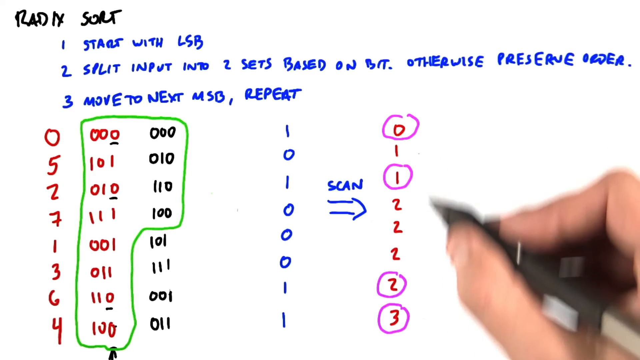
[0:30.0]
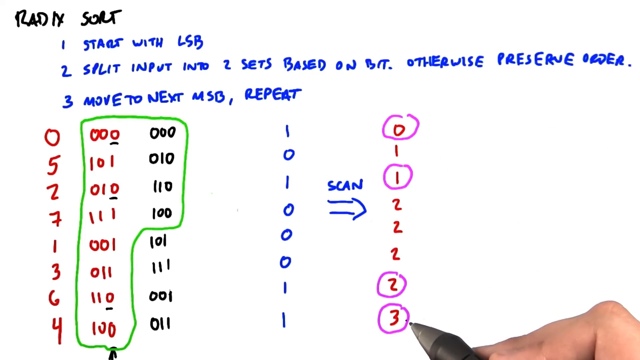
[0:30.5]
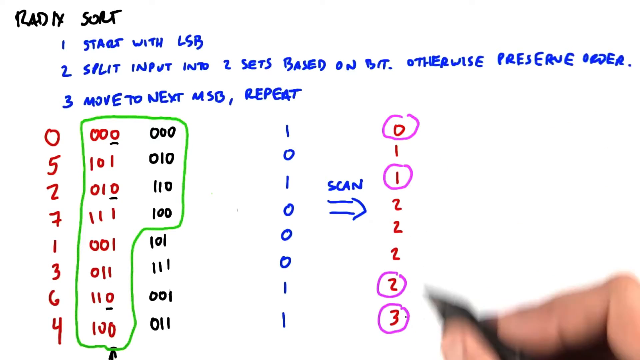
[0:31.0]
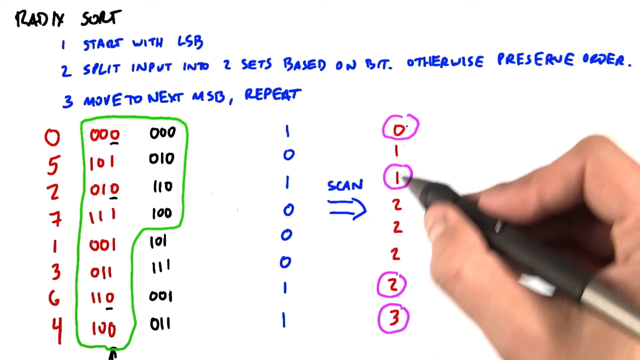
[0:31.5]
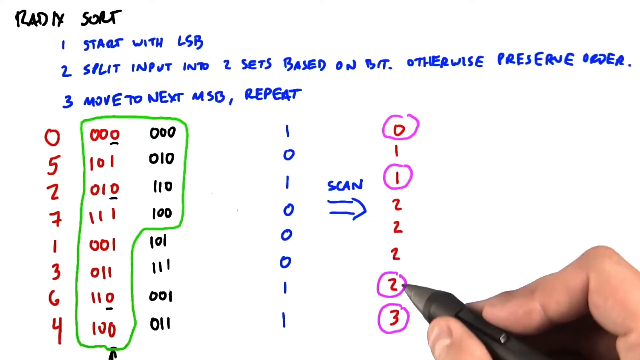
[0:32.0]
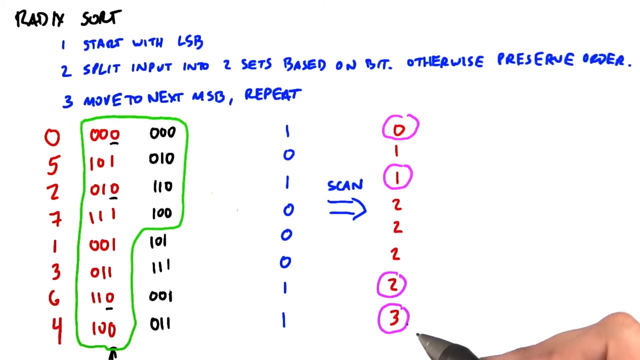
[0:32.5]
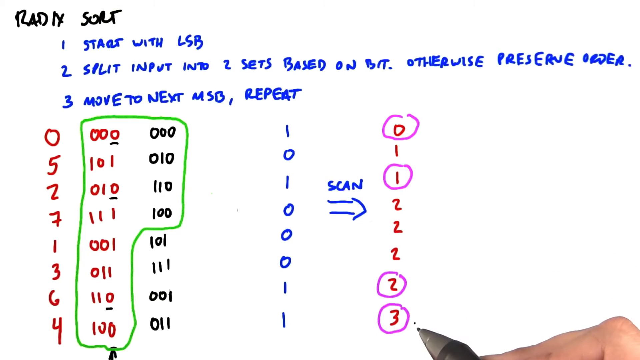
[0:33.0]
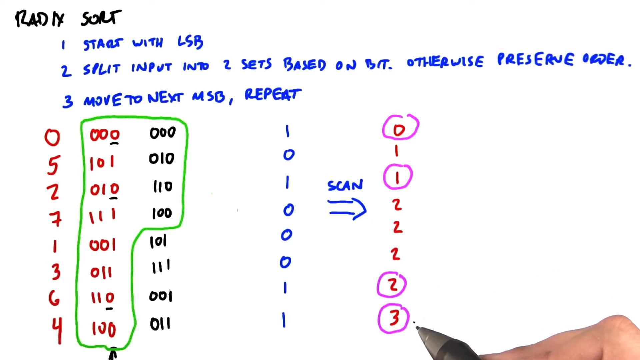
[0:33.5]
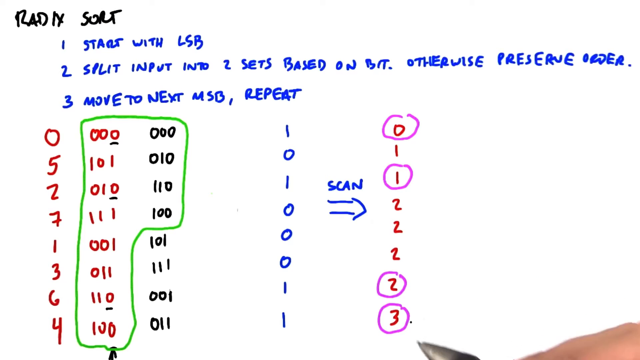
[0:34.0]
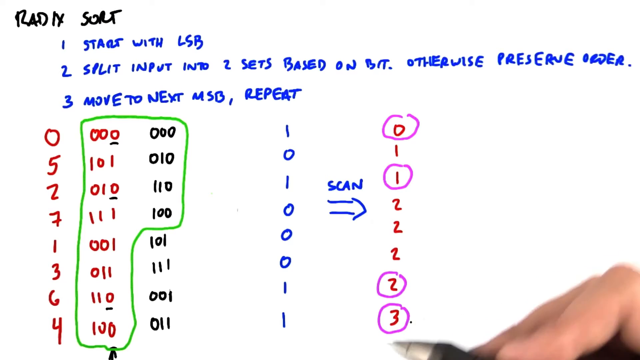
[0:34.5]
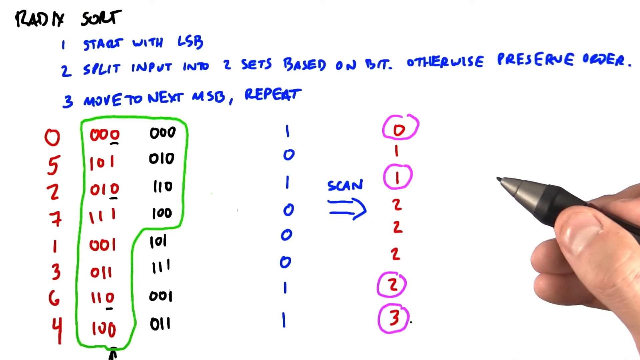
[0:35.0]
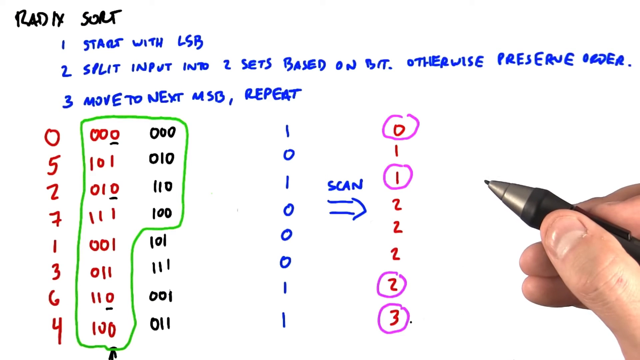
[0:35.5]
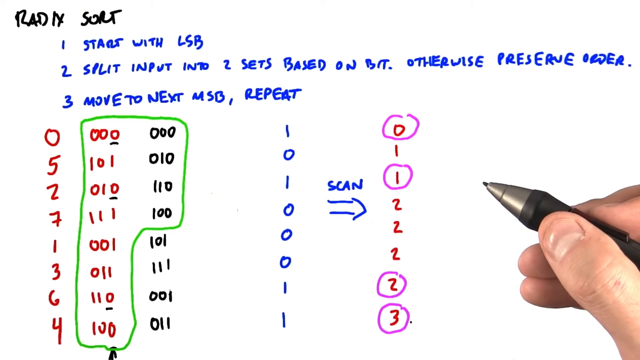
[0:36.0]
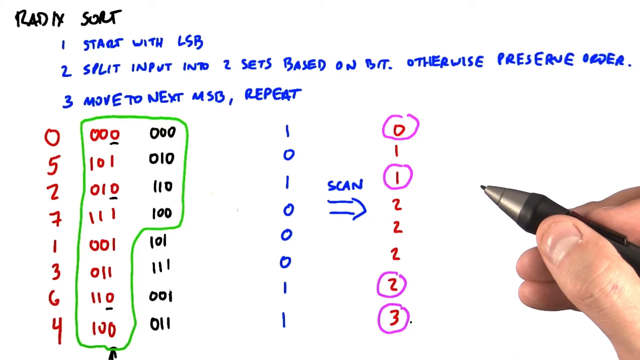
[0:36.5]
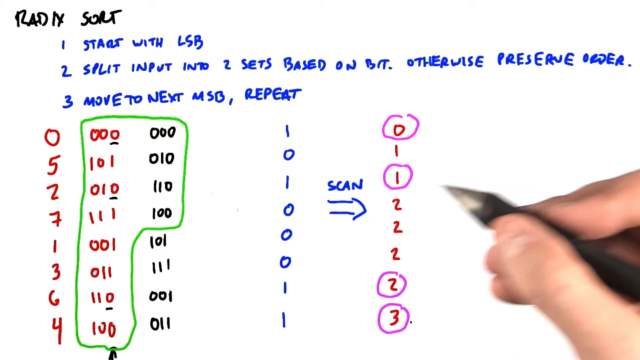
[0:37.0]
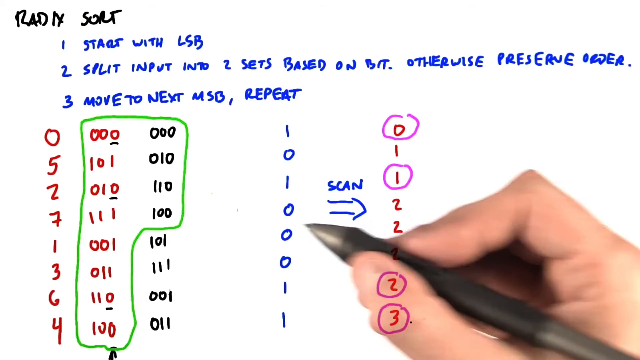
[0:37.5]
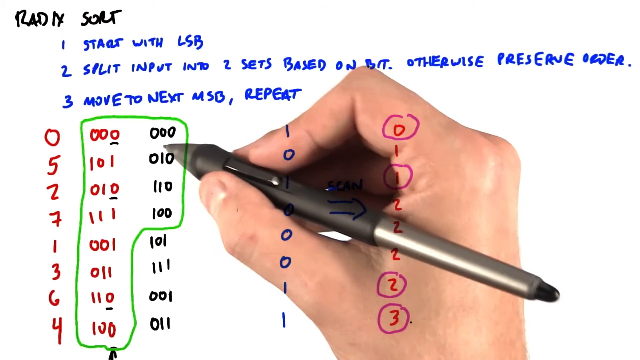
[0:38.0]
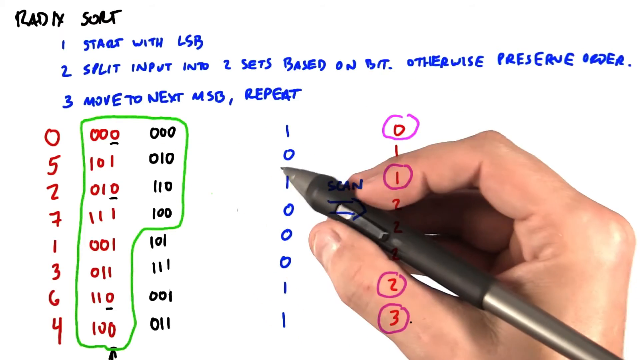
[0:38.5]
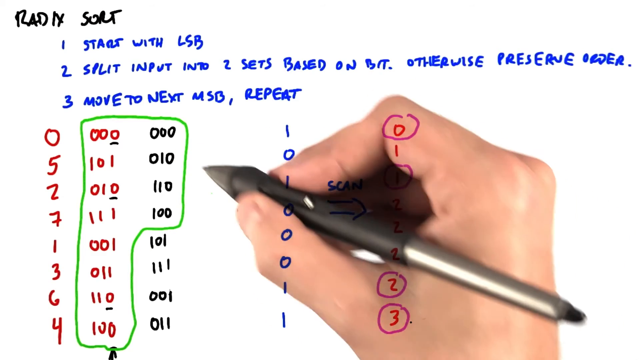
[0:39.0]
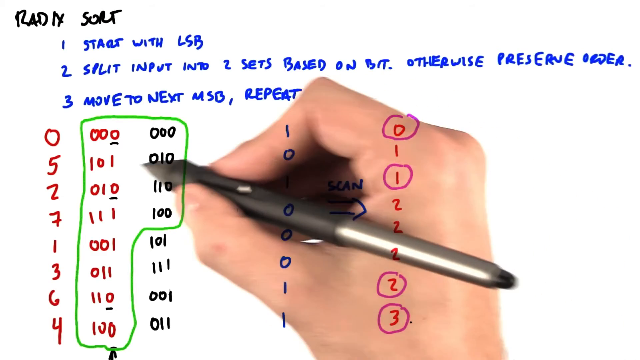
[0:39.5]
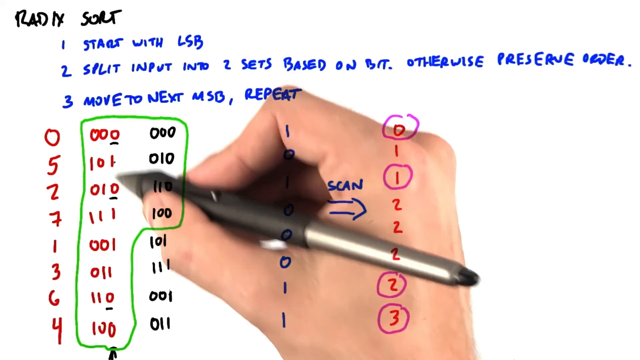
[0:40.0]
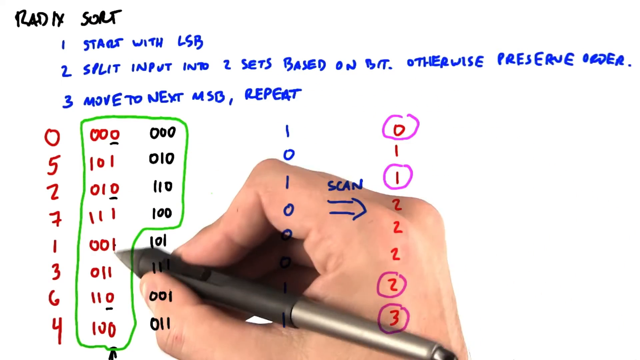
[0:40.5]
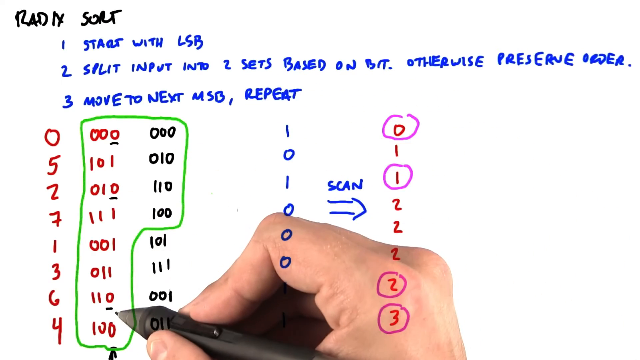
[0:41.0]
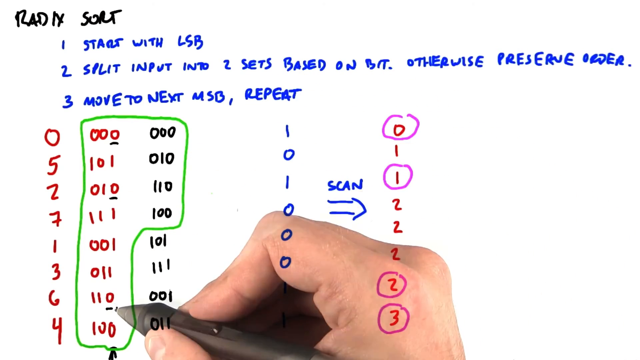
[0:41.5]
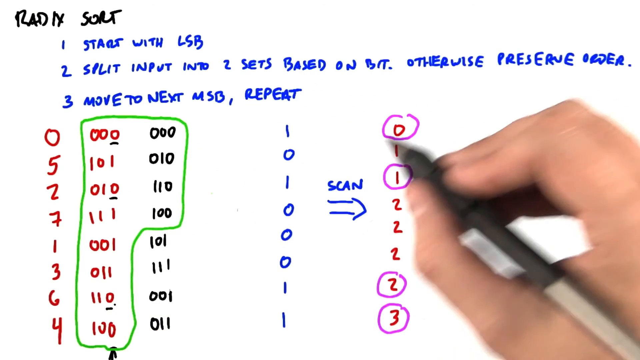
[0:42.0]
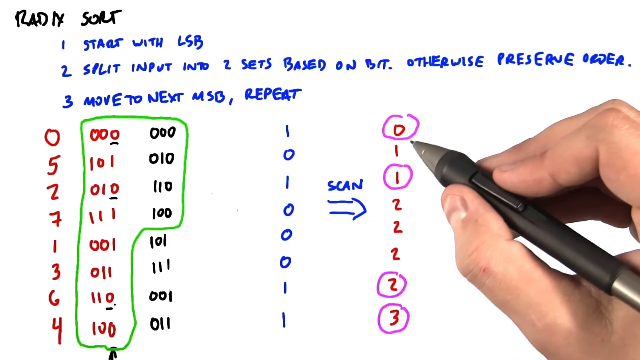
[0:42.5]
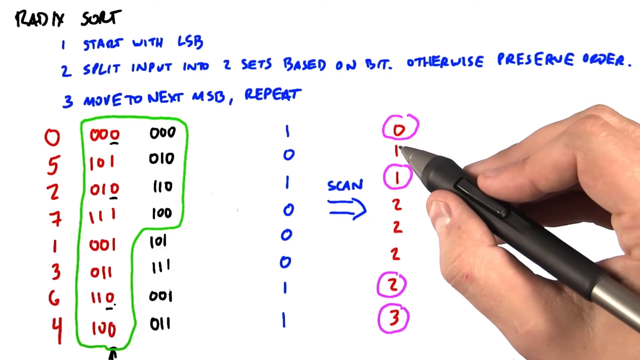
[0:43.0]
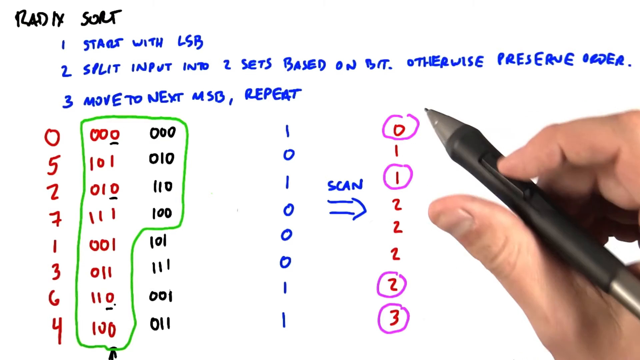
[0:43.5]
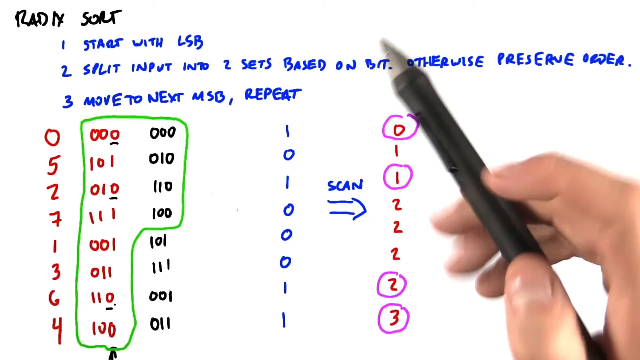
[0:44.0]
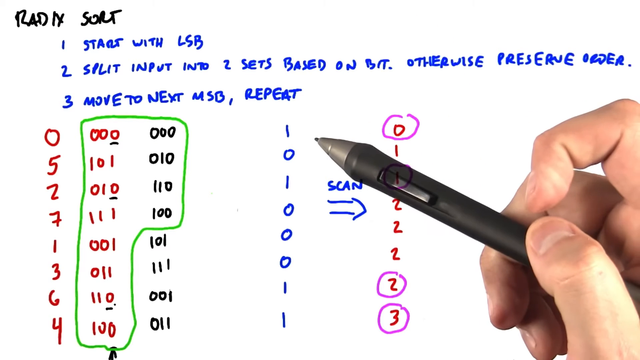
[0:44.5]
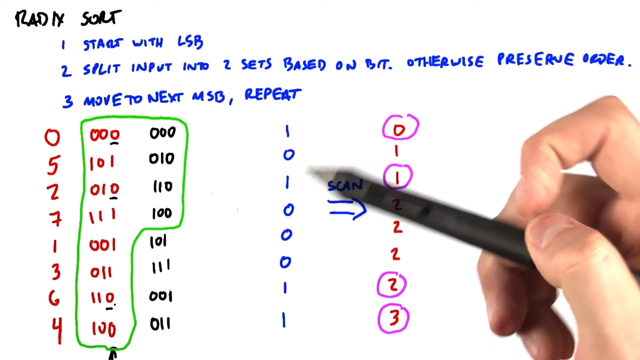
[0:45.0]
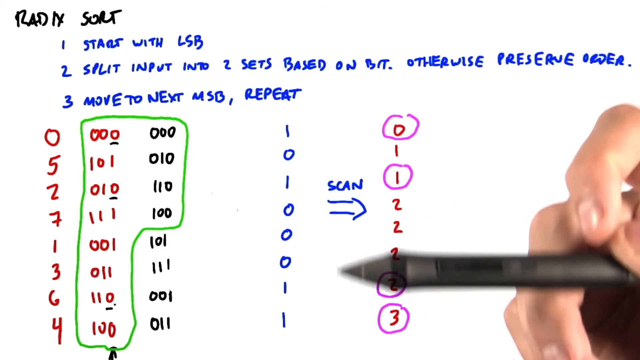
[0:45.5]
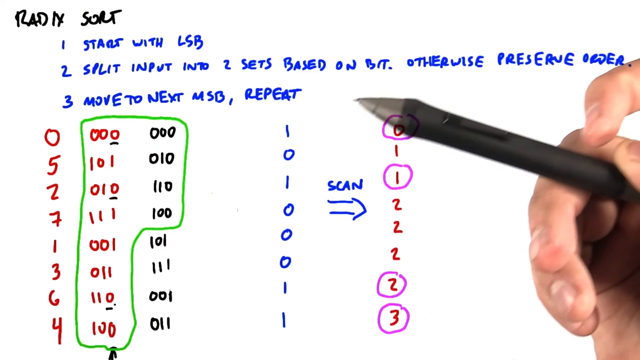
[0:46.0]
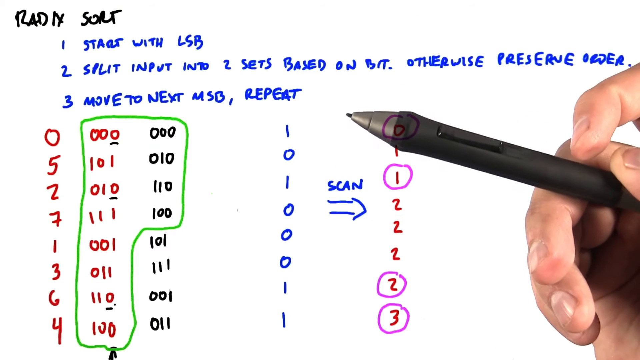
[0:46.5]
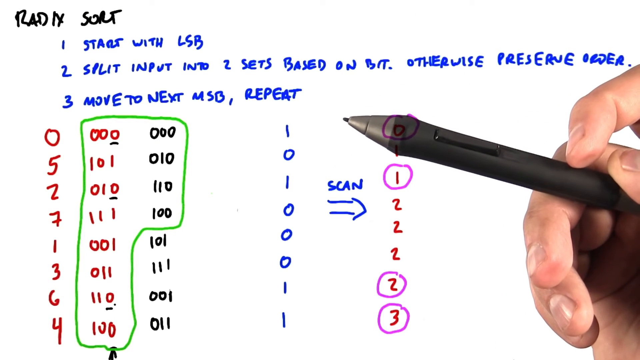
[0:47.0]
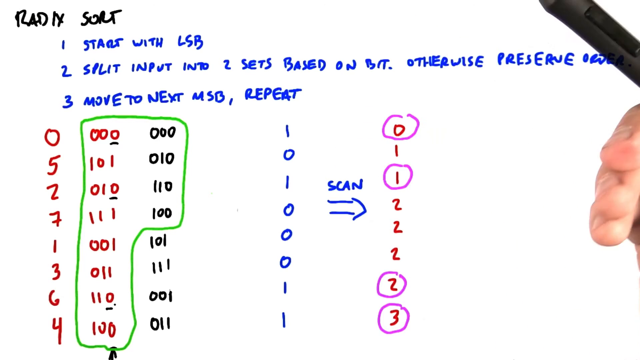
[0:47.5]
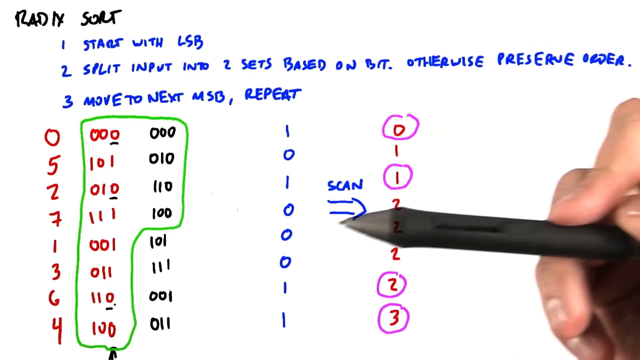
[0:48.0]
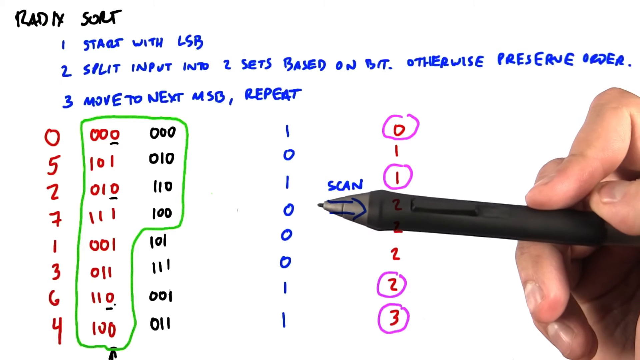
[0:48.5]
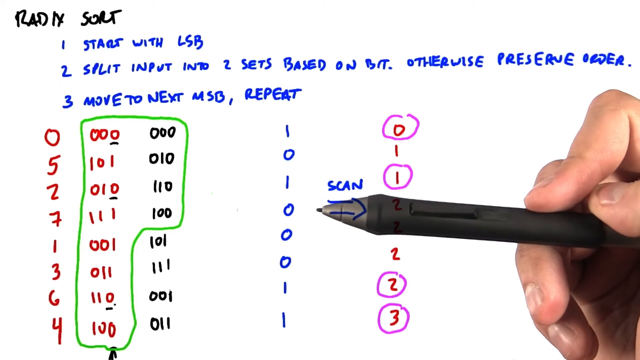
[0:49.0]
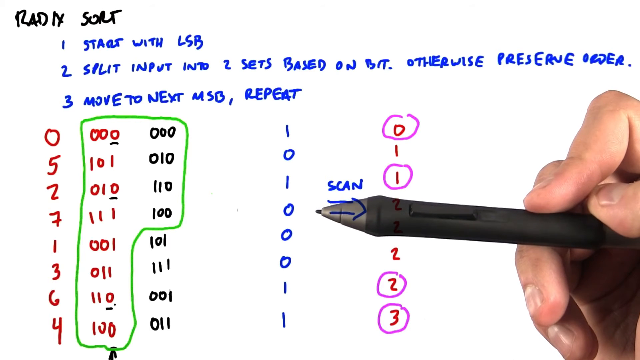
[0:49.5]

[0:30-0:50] Someone is working on some math, their hand on the screen holding a stylus that they use to manipulate the text and numbers. At one point they move their hand up and down along the column written on the right side of the page, which runs from top to bottom 0, 1, 1, 2, 2, 2, 2, 3. To the left of that, the word "scan" is written in blue ink, with an arrow underneath it pointing over to the right column. To the left of "scan" is a column of numbers written in blue, reading 1, 0, 1, 0, 0, 0, 1, 1 from top to bottom. Farther left are rows, each beginning with a number, forming a column all the way on the left that reads 0, 5, 2, 7, 1, 3, 6, 4.